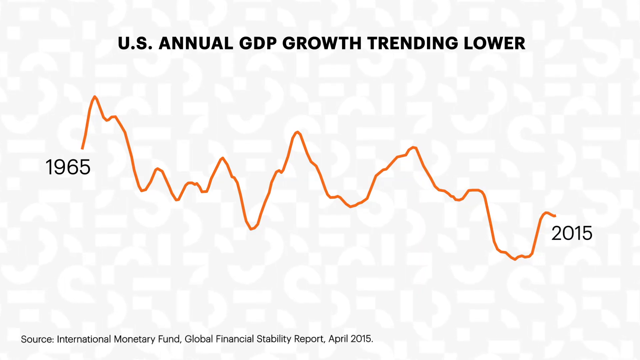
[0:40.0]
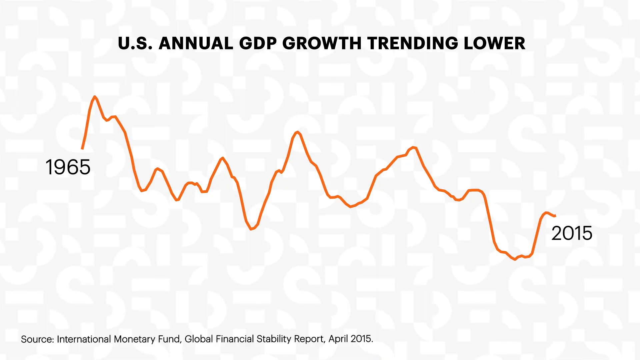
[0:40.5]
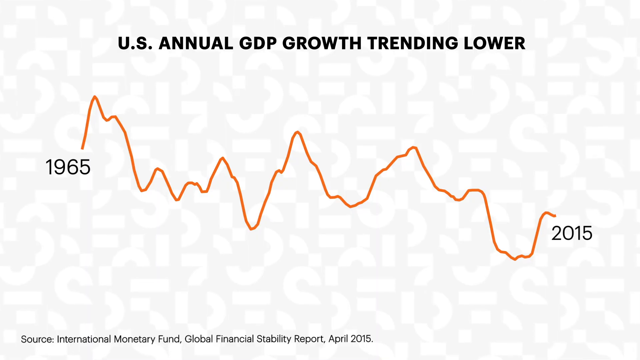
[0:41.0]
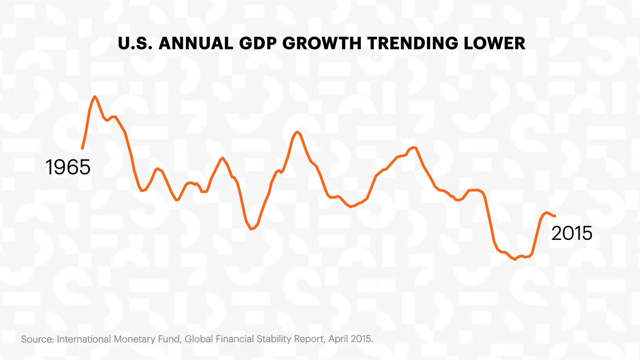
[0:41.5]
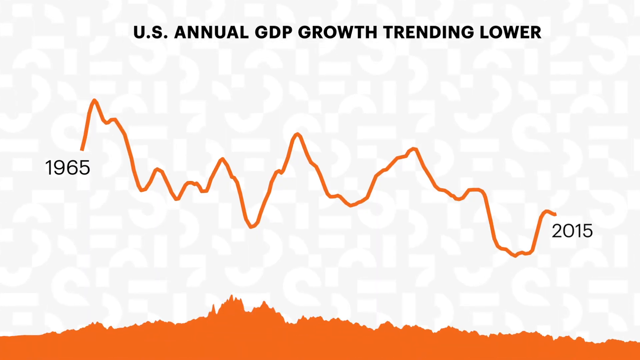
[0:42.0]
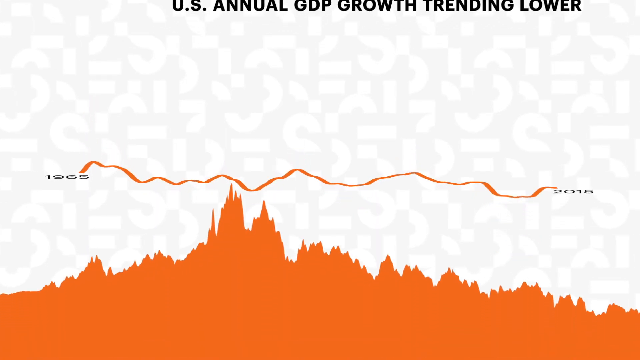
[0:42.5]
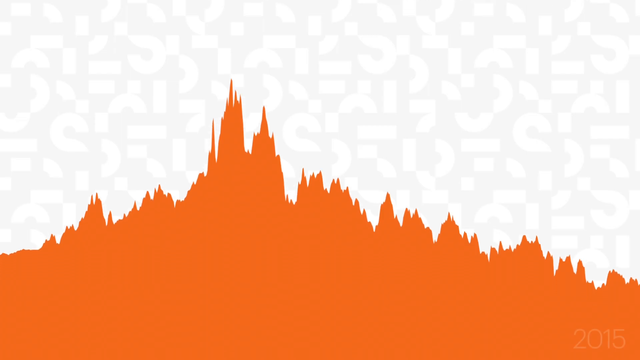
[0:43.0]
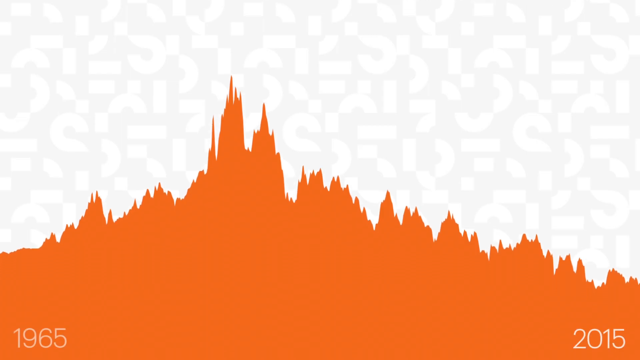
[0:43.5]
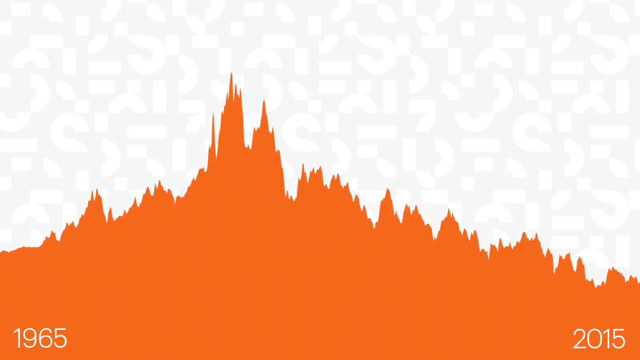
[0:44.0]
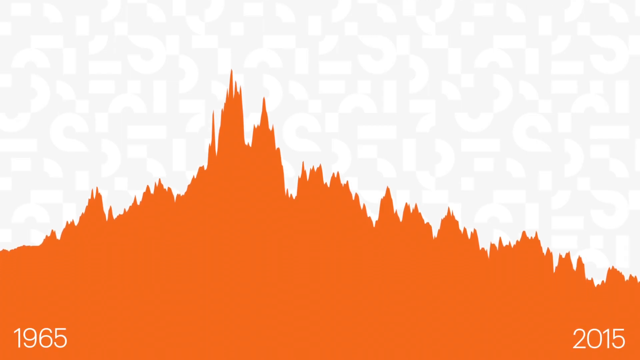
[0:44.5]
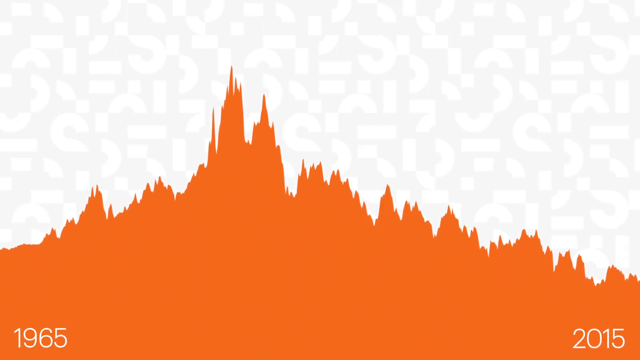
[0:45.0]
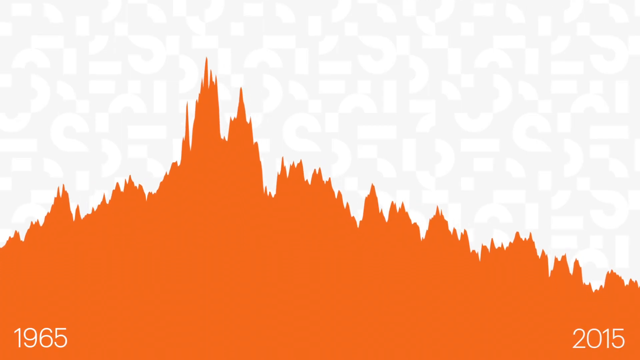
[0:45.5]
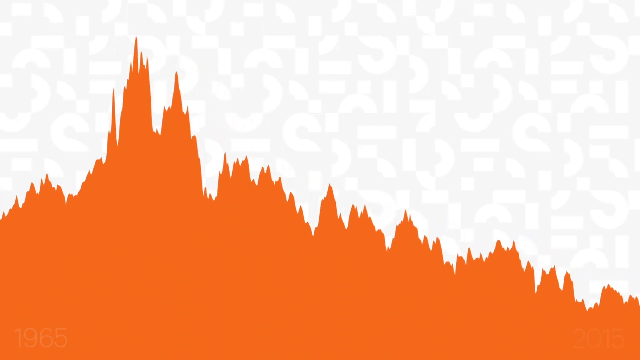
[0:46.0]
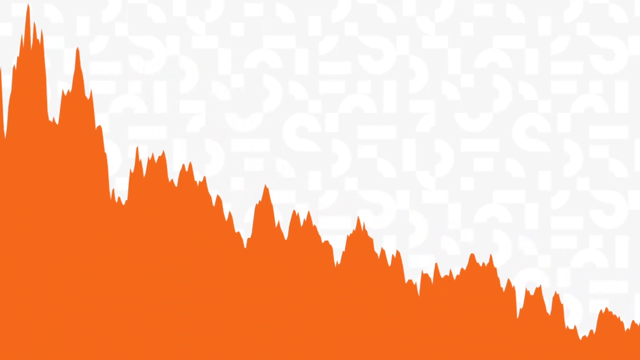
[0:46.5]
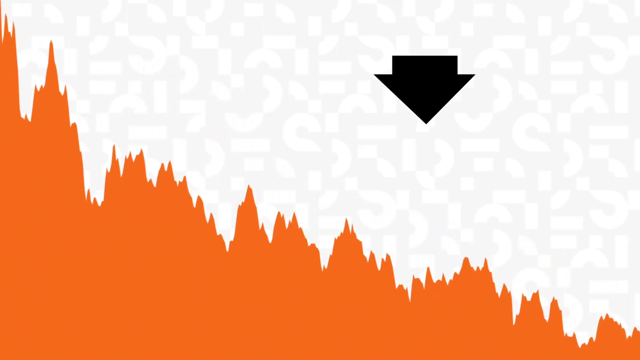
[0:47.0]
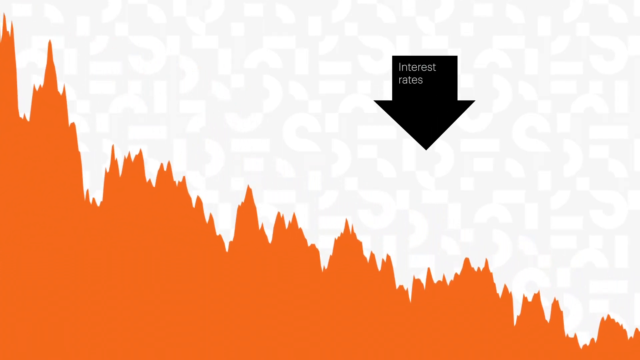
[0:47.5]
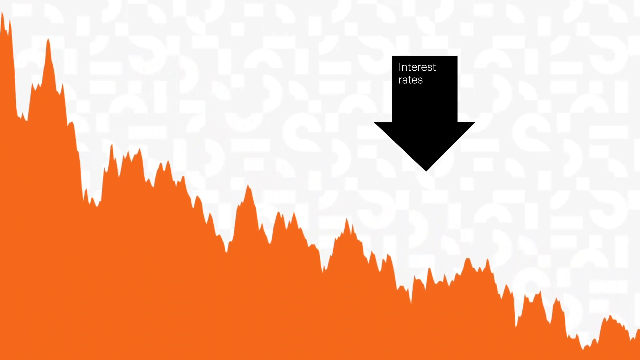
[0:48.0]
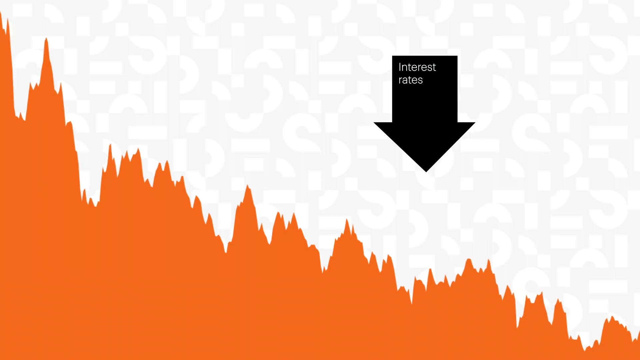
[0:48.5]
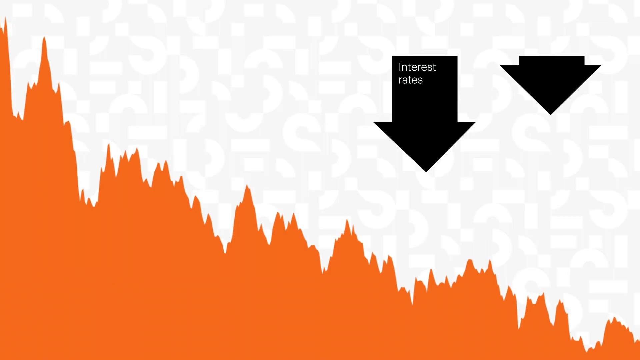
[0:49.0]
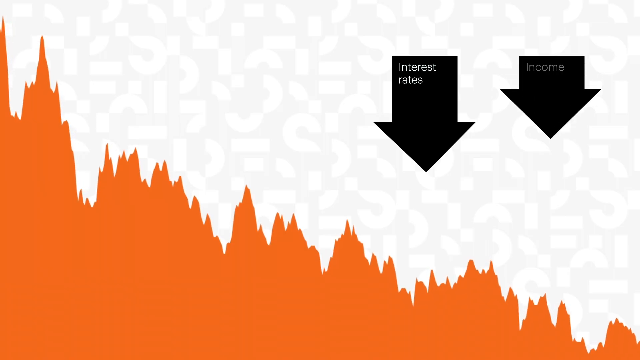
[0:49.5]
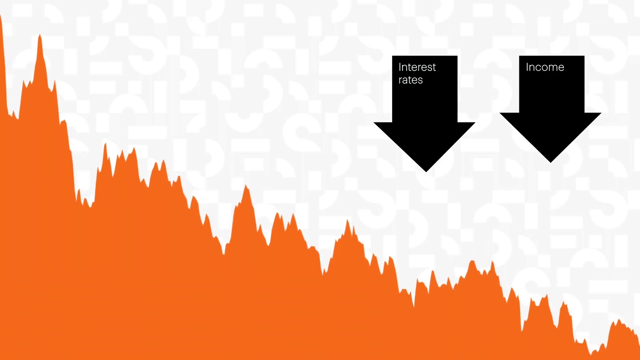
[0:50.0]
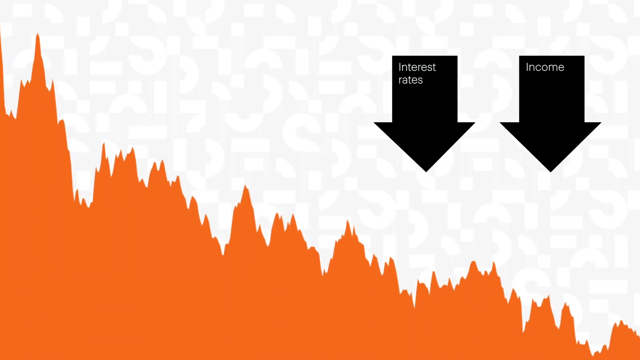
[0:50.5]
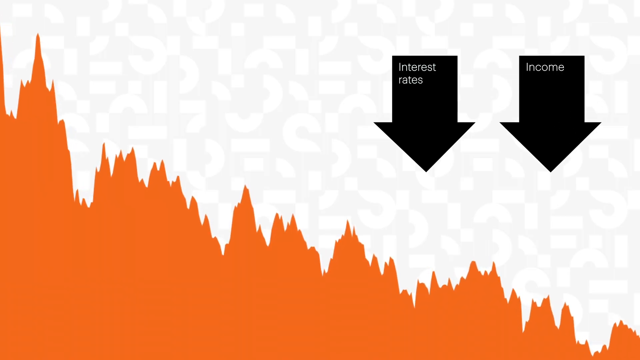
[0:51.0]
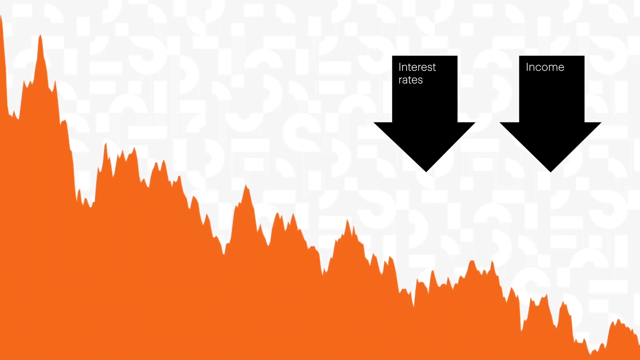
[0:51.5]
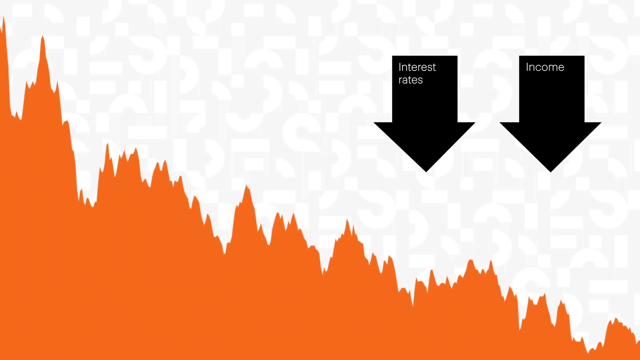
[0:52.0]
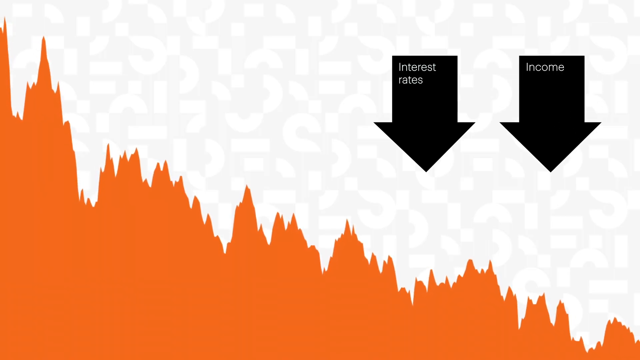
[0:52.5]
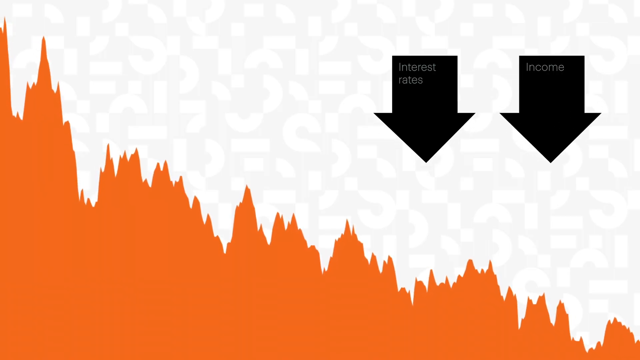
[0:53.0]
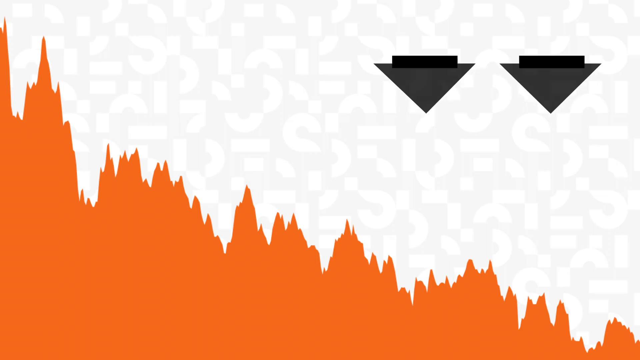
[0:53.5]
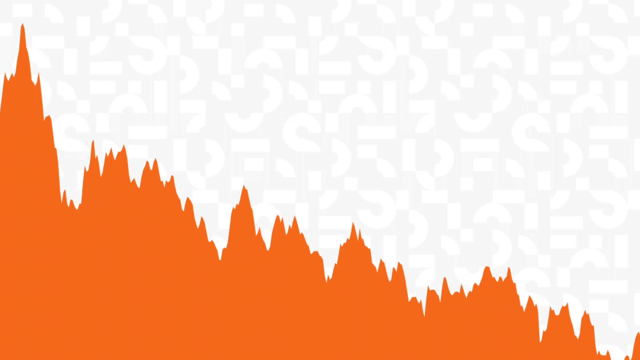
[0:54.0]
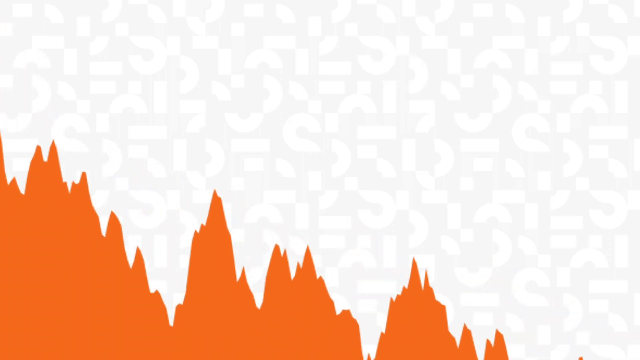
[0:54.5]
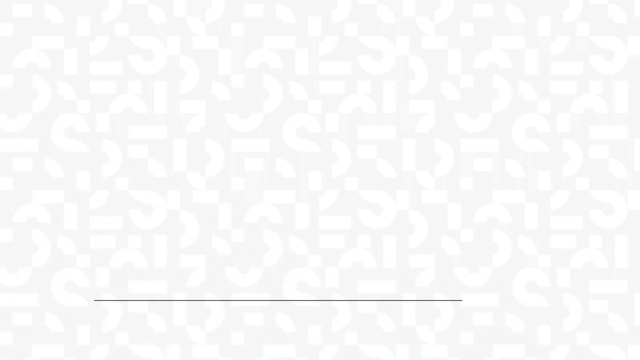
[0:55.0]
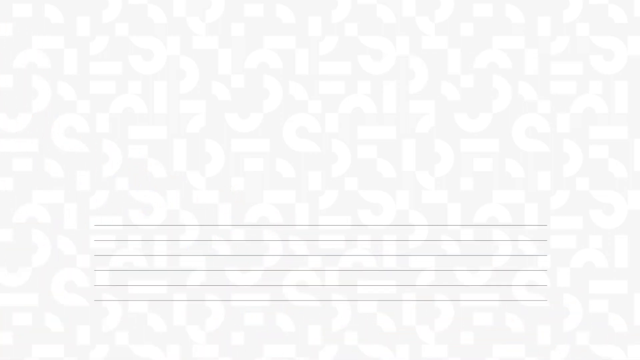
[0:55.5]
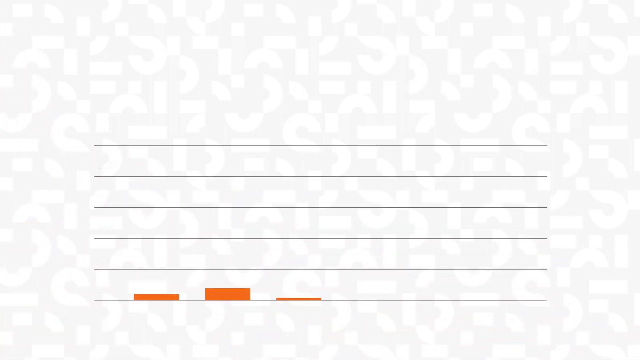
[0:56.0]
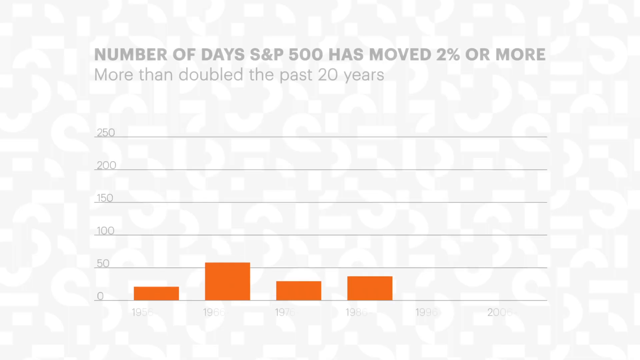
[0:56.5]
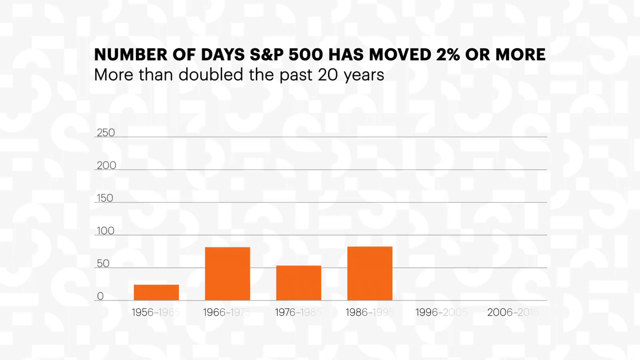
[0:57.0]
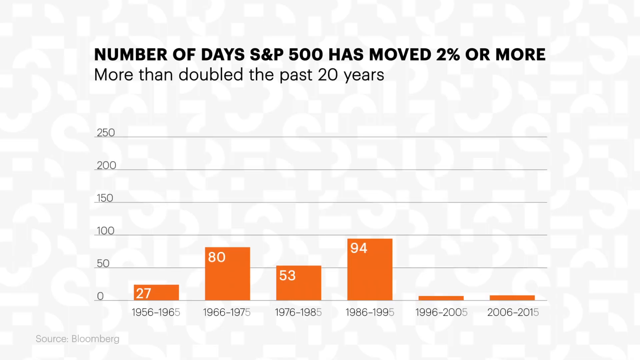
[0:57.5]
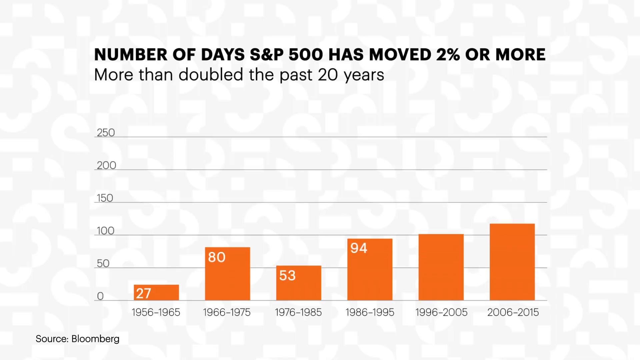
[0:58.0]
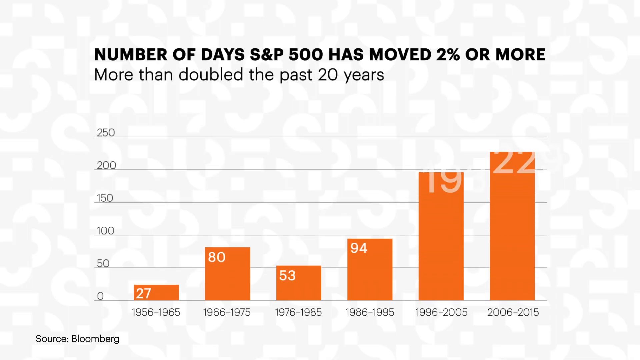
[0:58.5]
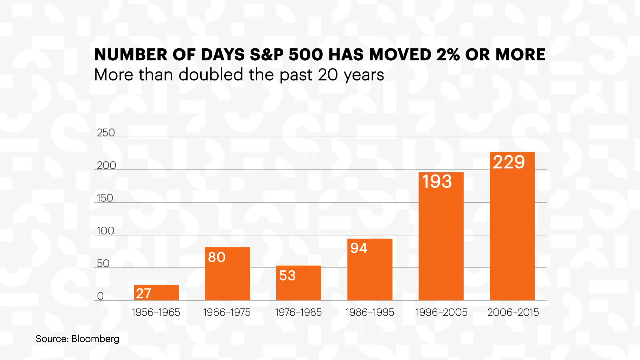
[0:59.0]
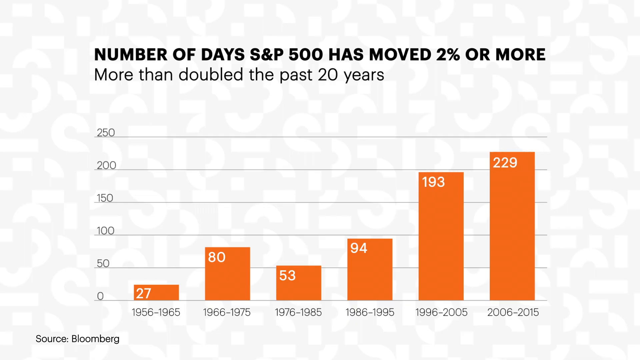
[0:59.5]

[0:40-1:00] A graph is labeled "1965" at one end and "2015" at the other, with an orange graph between them that kind of looks like a stock market graph, going up and down like hills. Black all-caps text at the top reads "U.S. annual GDP growth trending lower," on a white background. Another orange graph appears, with "1965" in the bottom left corner and "2015" in the bottom right corner in white text; it is filled in orange and looks almost like flames on the white background. The video then zooms in, and a black arrow pointing downward appears with "interest rates" on it in white text. A second black arrow, also pointing downward, appears next to it with "income" in white text on top. The arrows pull back up and disappear. A bar graph follows, headed in all caps "number of days S&P 500 has moved 2% or more," with "more than doubled the past 20 years" underneath in normal capitalization. The graph's scale goes from zero to 250, and it has six orange bars with white numbers.